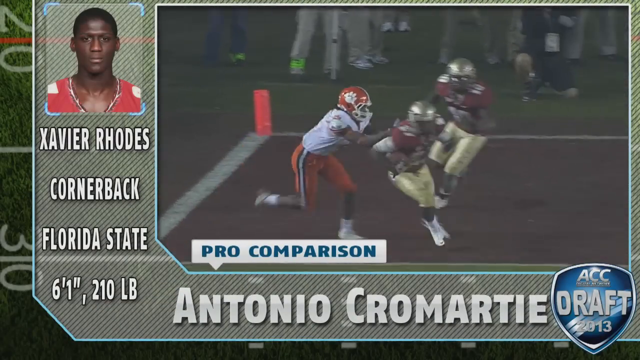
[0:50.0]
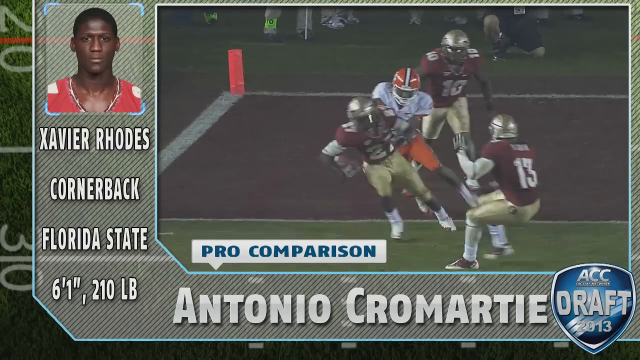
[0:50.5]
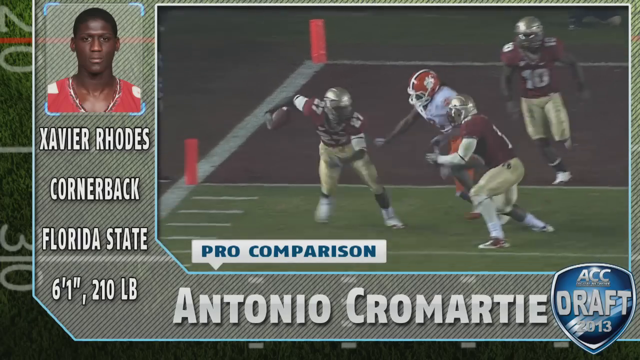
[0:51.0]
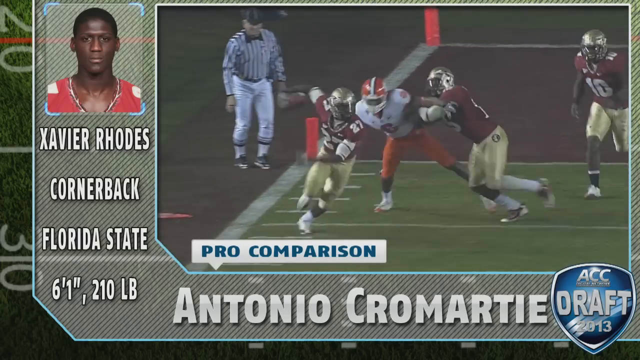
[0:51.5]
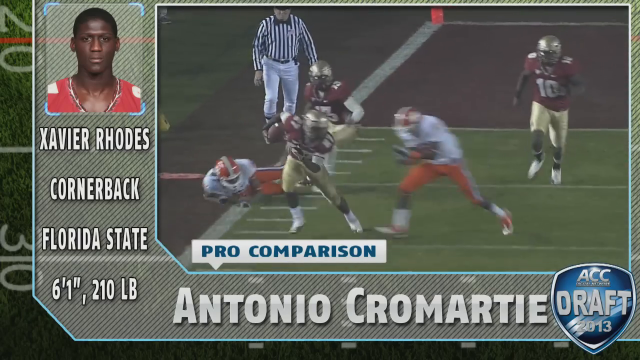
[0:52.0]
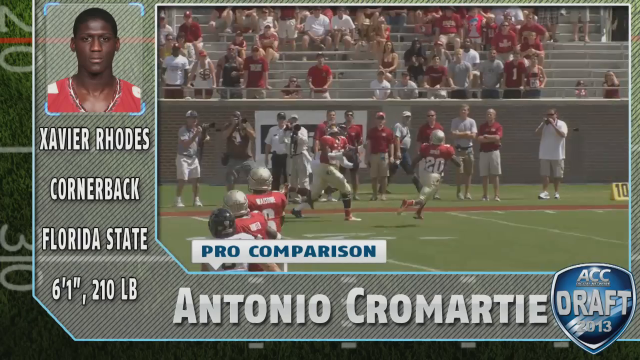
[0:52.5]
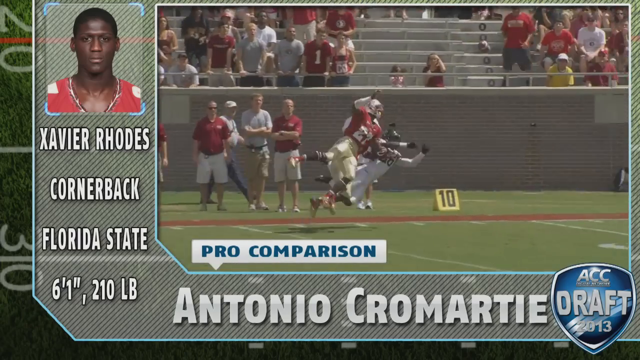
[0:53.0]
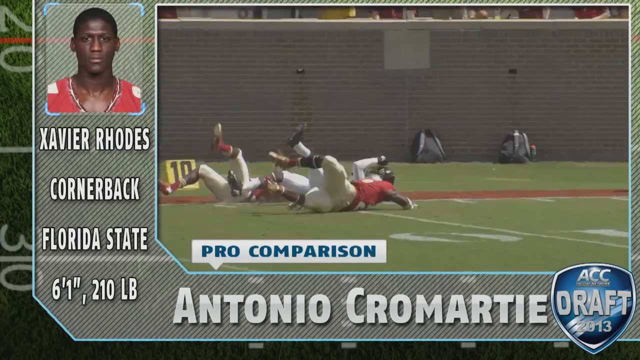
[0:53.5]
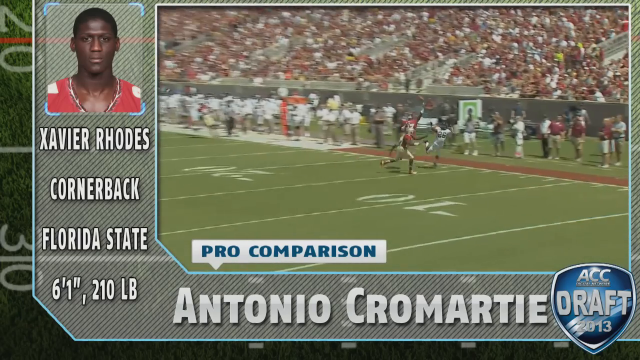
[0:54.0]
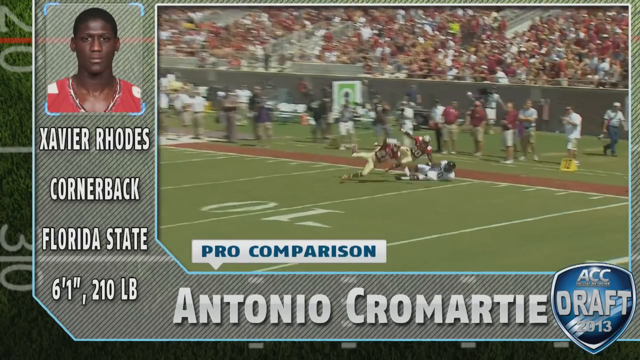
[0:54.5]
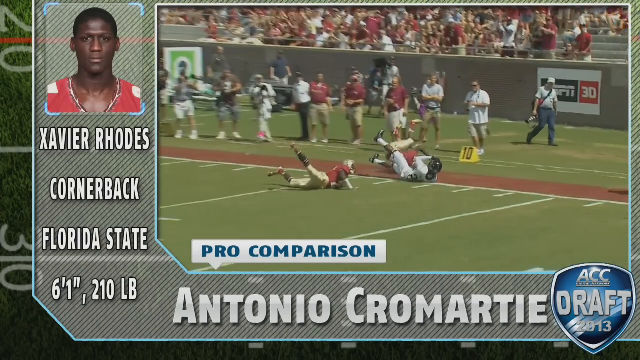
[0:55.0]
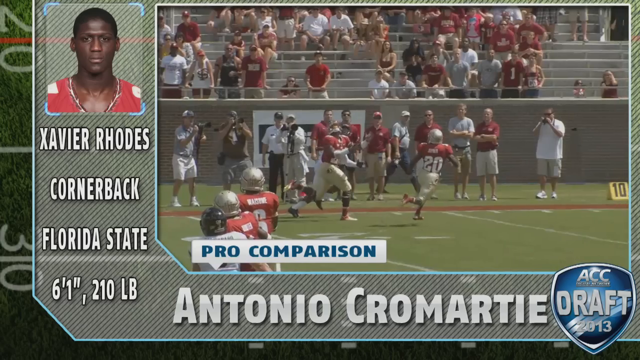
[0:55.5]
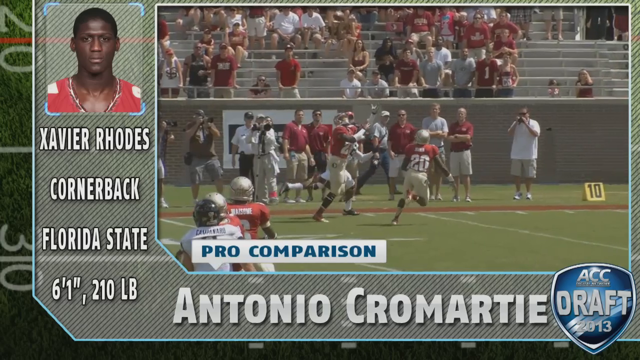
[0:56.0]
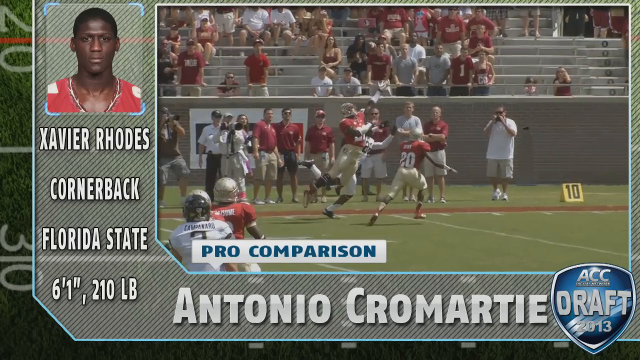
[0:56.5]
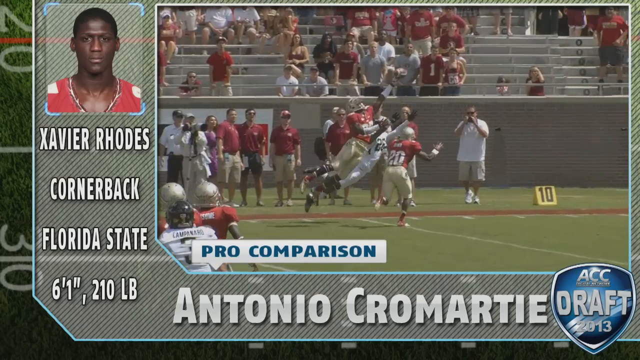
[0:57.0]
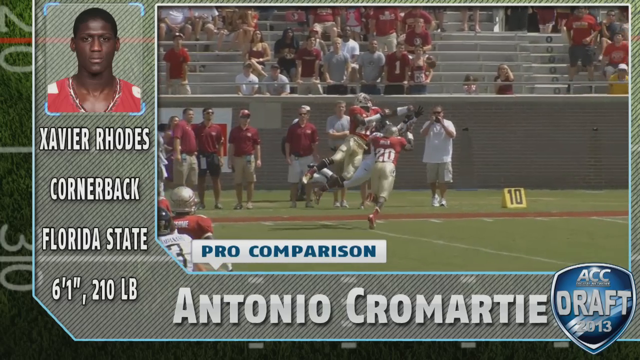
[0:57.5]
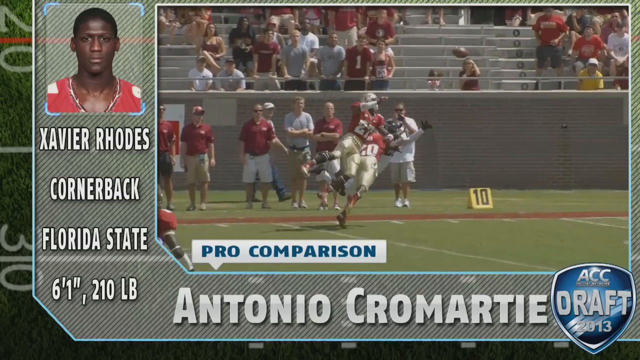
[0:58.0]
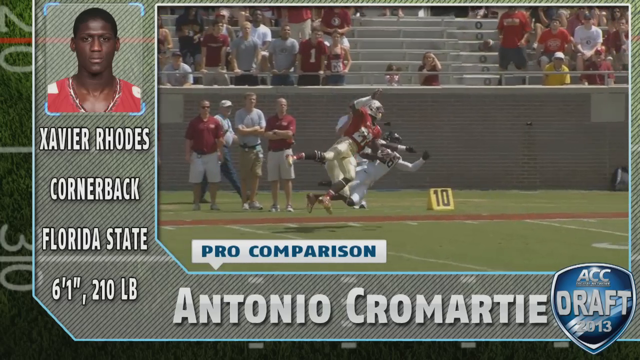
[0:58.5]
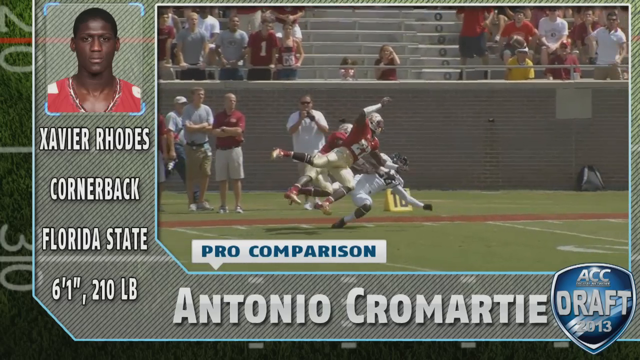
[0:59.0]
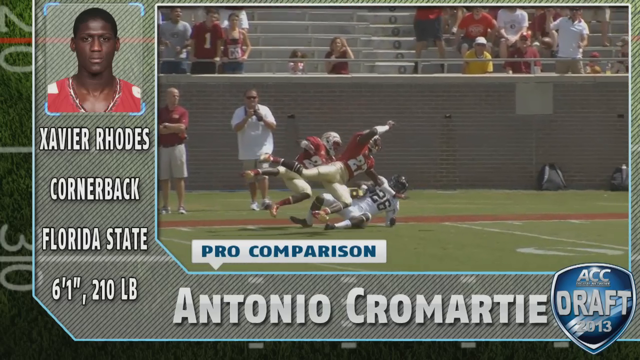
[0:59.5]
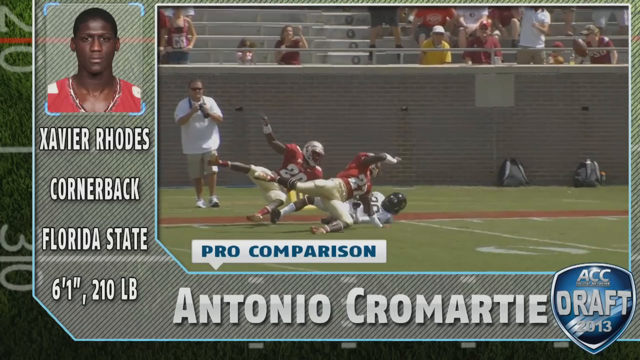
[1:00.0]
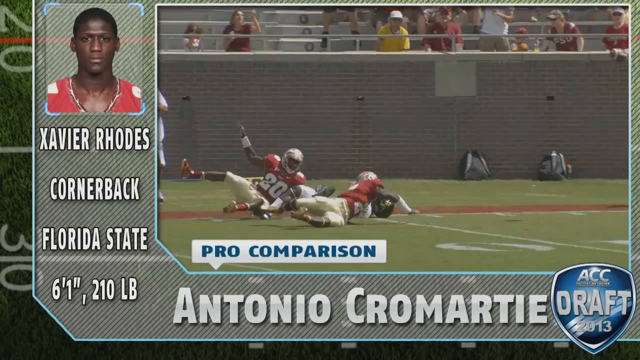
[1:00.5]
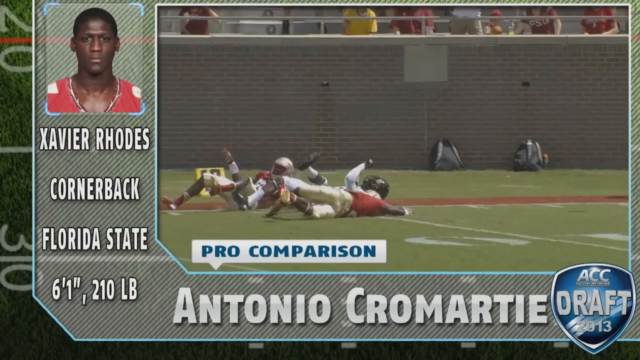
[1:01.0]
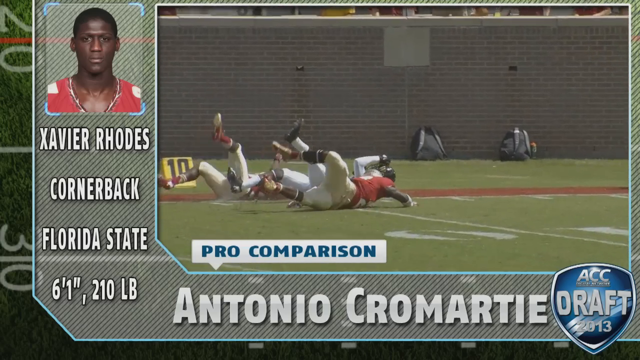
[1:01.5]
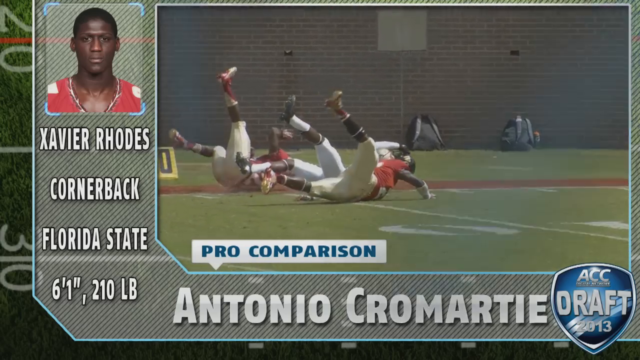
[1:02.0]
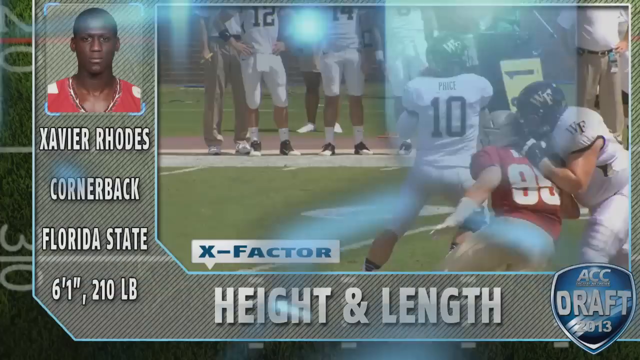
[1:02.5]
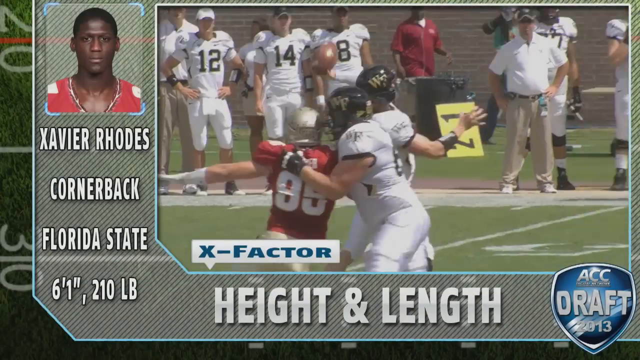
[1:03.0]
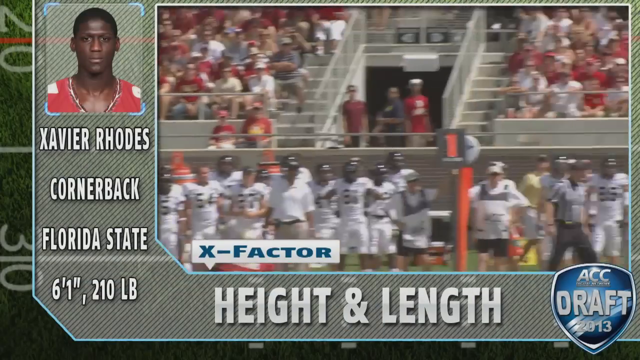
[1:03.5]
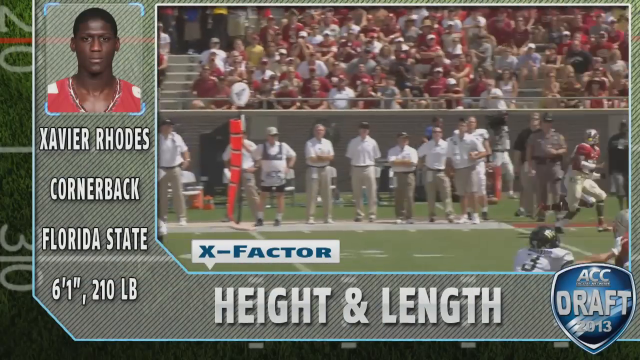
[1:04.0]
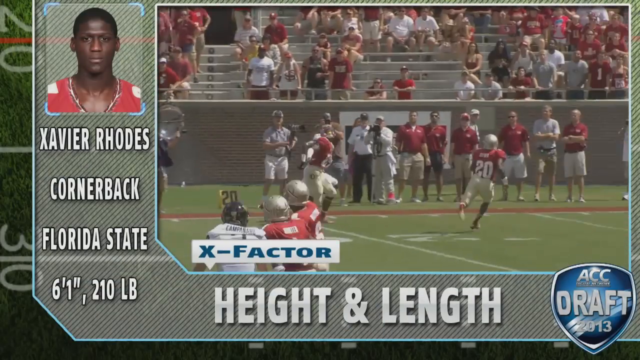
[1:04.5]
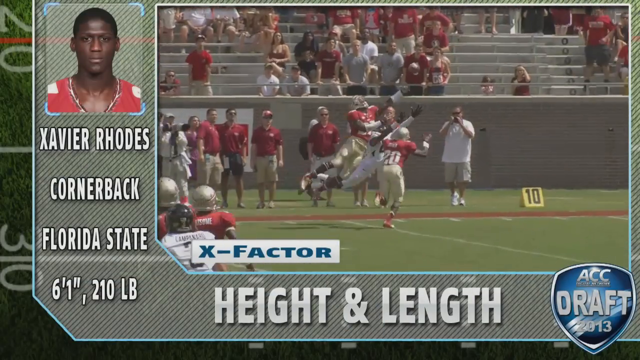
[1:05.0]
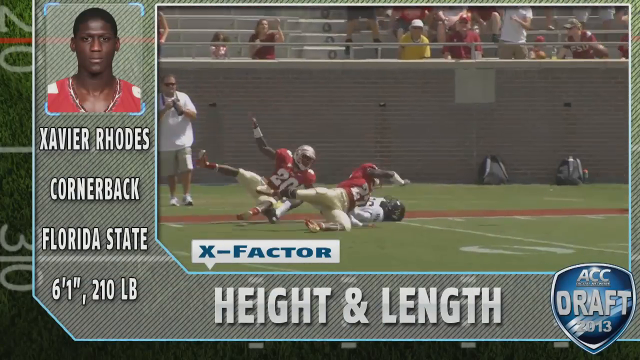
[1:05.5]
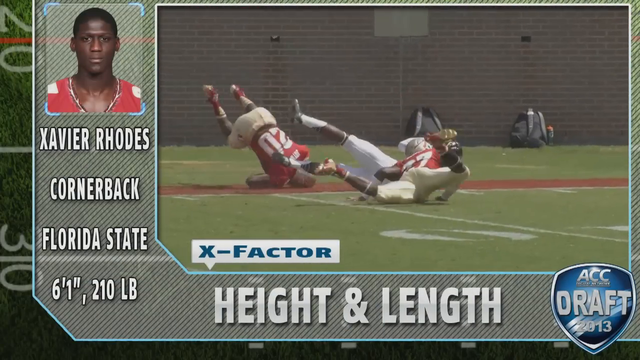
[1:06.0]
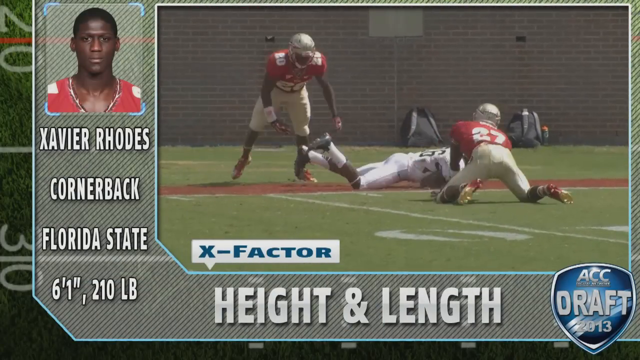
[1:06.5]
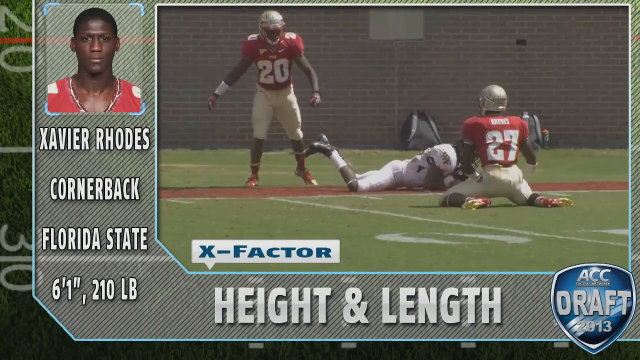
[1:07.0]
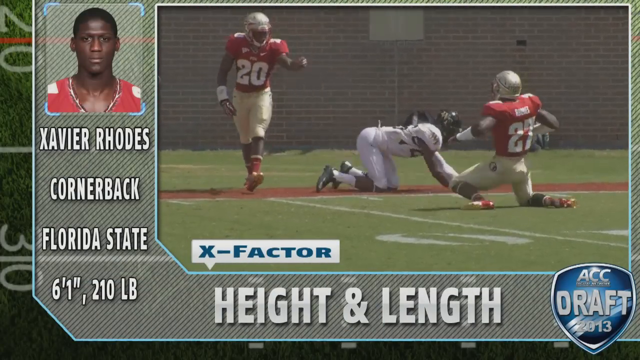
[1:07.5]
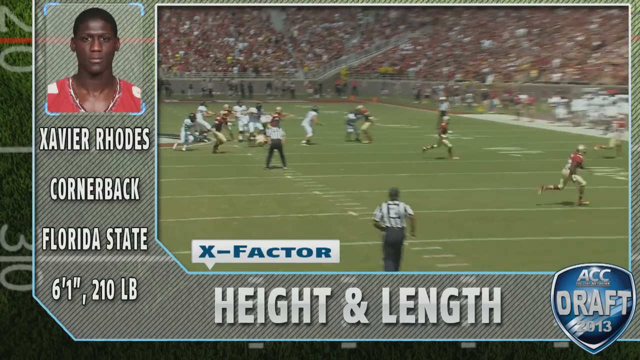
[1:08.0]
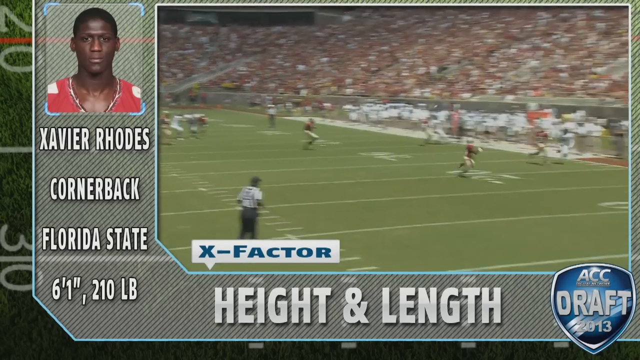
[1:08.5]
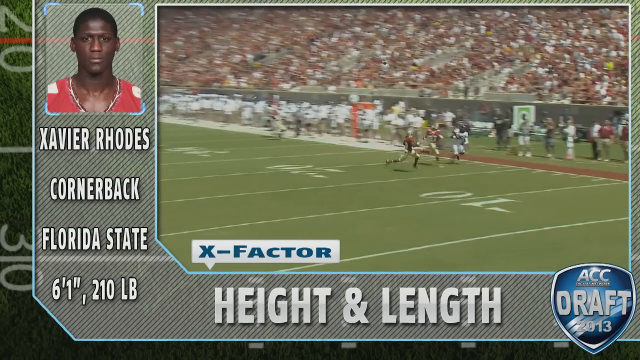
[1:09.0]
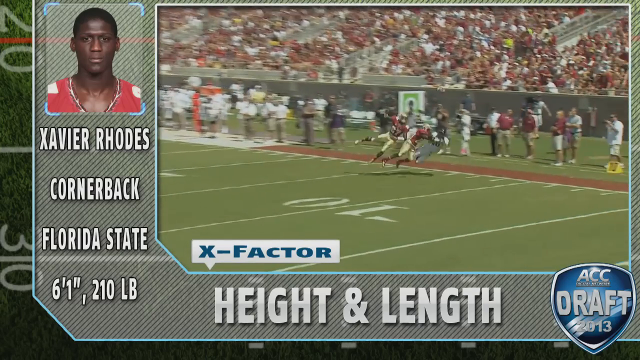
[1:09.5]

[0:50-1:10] The purple and gold team seem to have the ball but seem to lose it, making all three of them fall back. Cameramen are around capturing the moment, team players are around looking around the game, and fans are seated at the back, surrounding the game. There seems to be a rough physical encounter between two players of the gold and purple team and the white and gold team. A red team seems to be going around the pitch.